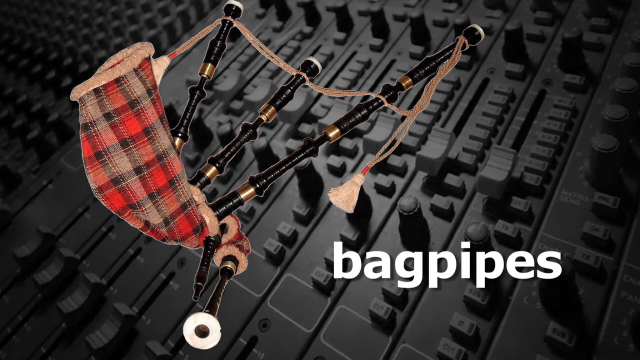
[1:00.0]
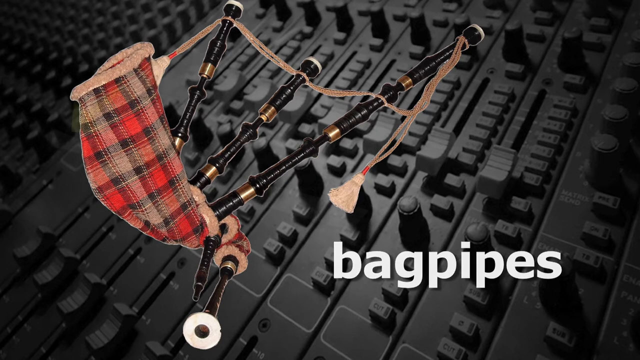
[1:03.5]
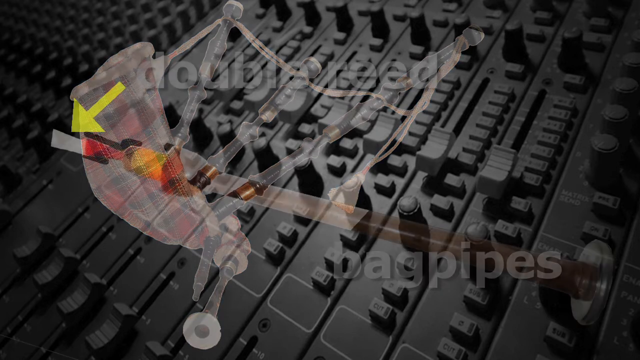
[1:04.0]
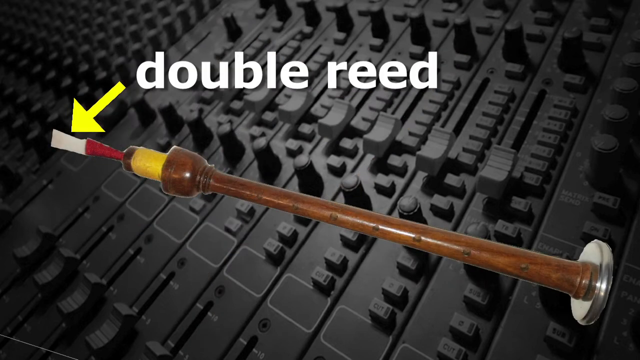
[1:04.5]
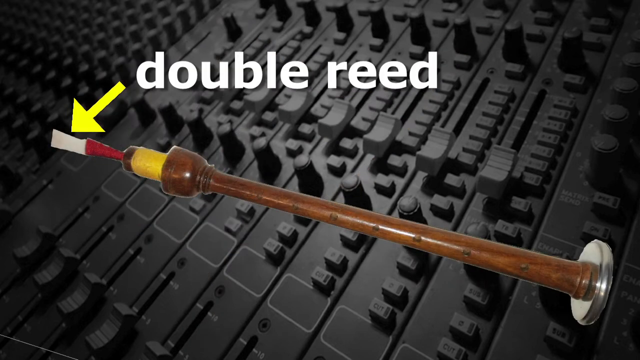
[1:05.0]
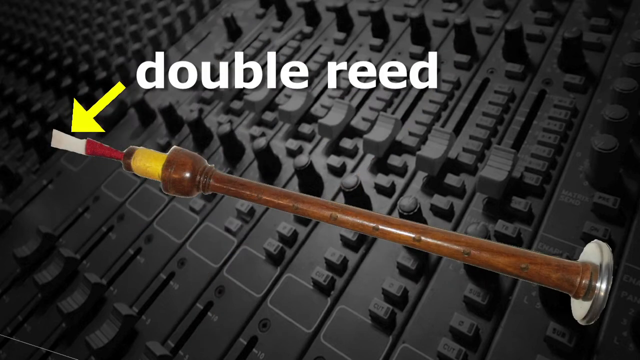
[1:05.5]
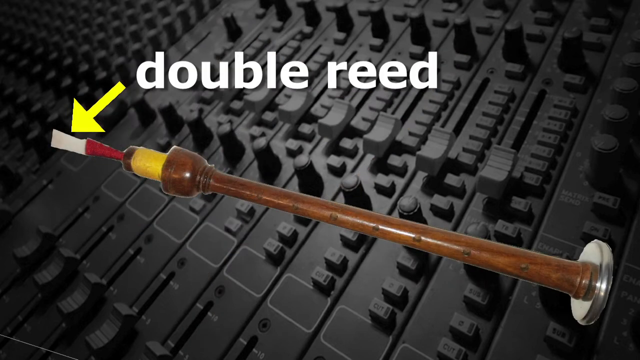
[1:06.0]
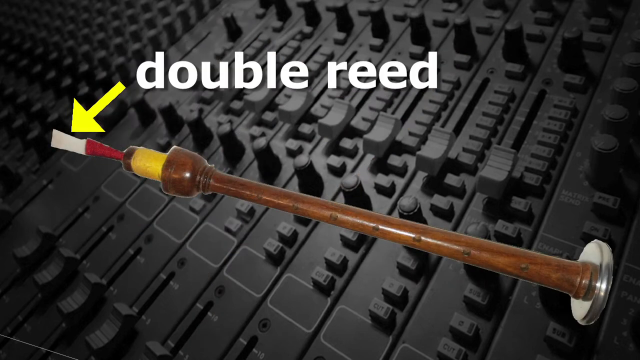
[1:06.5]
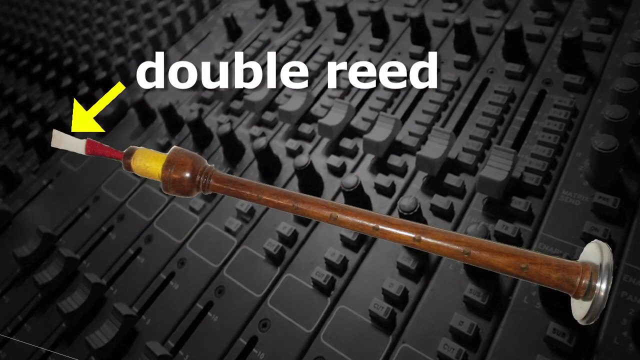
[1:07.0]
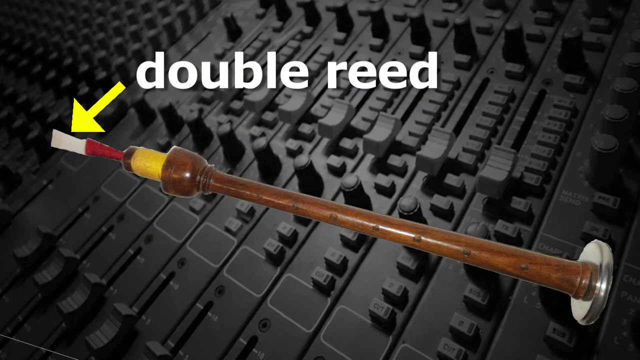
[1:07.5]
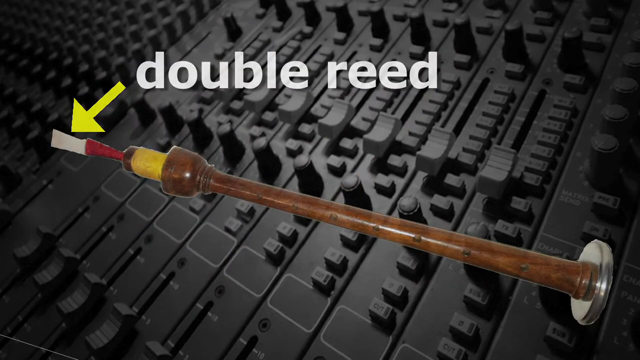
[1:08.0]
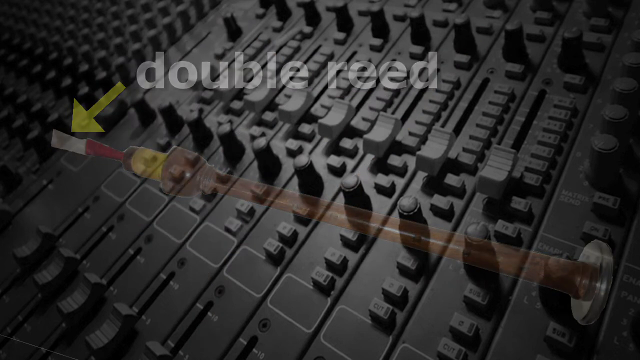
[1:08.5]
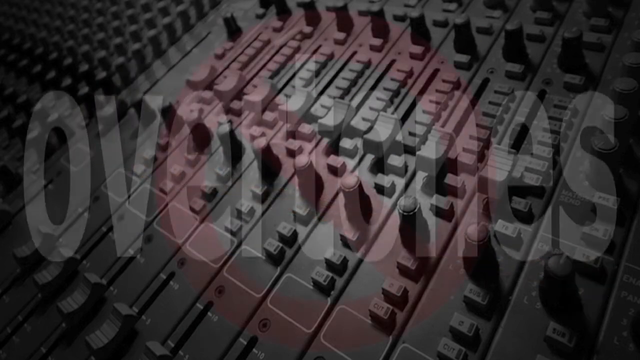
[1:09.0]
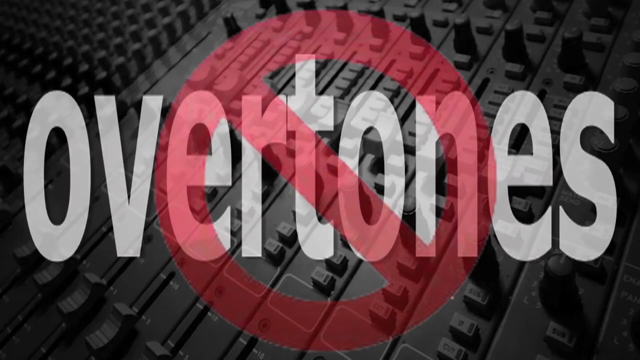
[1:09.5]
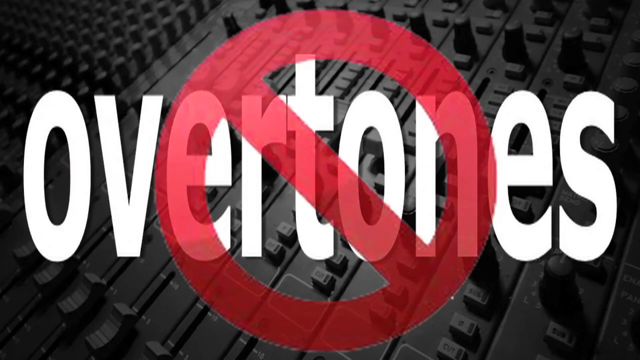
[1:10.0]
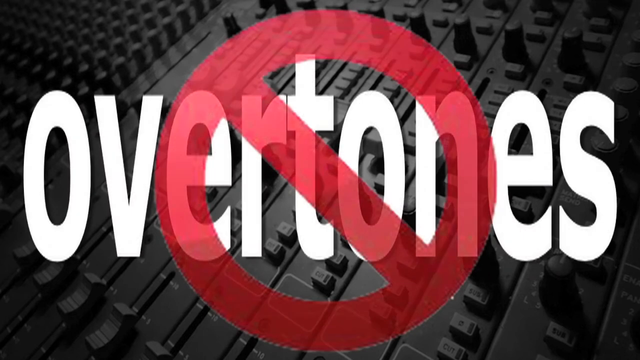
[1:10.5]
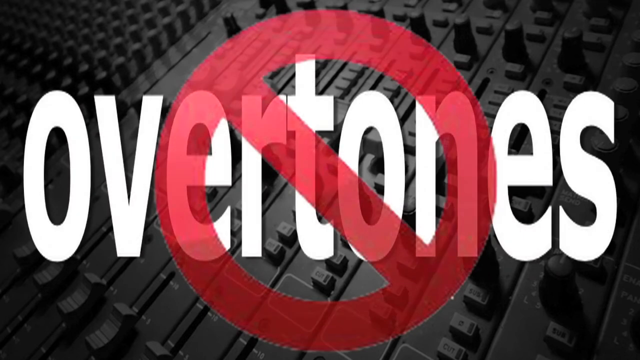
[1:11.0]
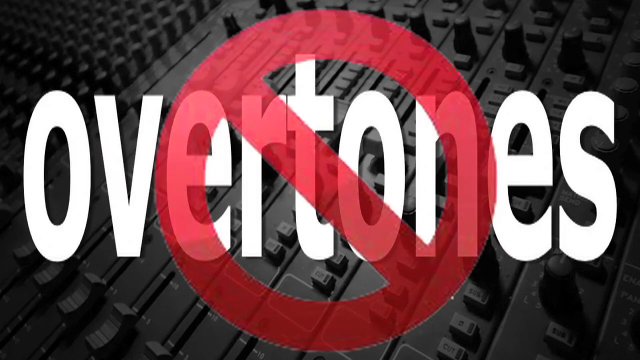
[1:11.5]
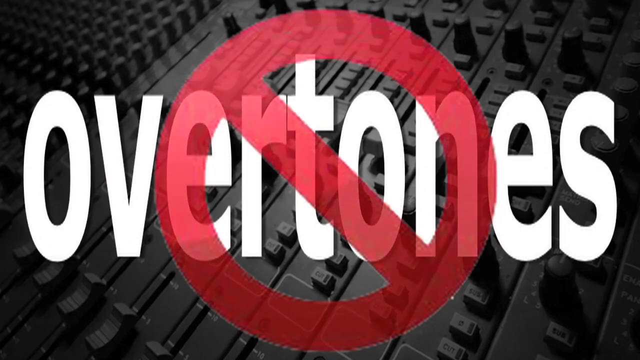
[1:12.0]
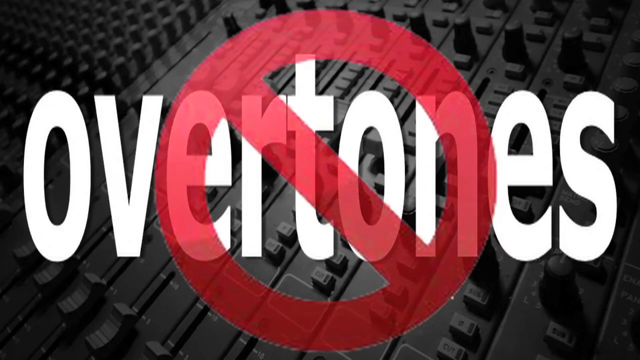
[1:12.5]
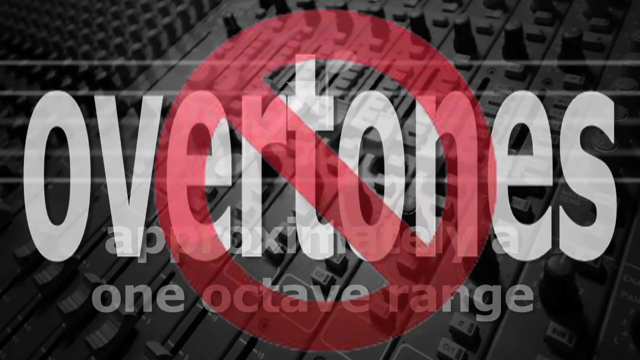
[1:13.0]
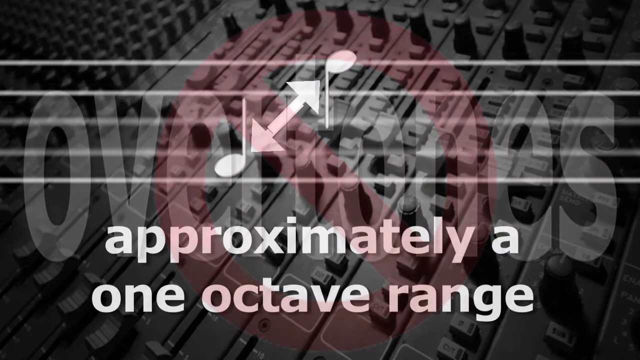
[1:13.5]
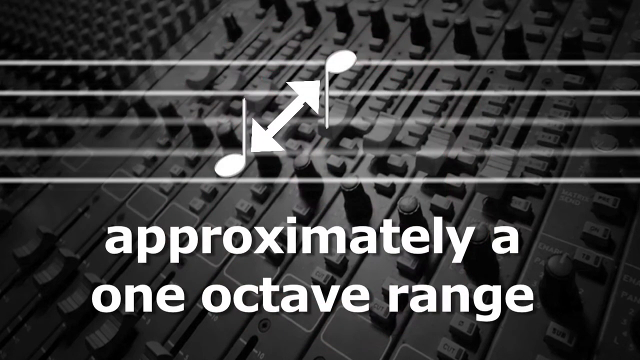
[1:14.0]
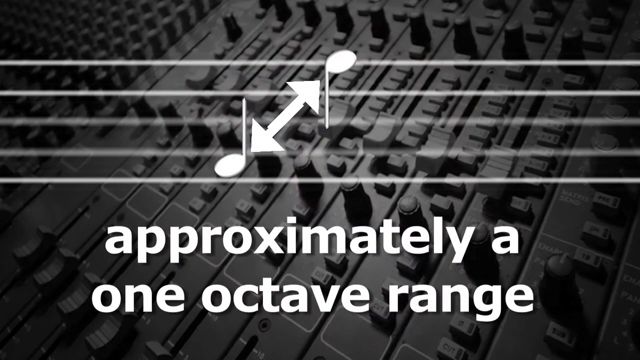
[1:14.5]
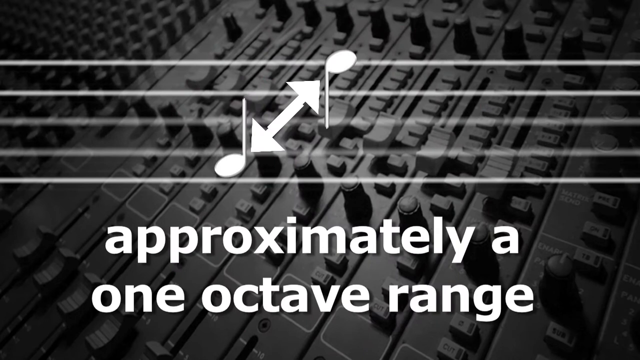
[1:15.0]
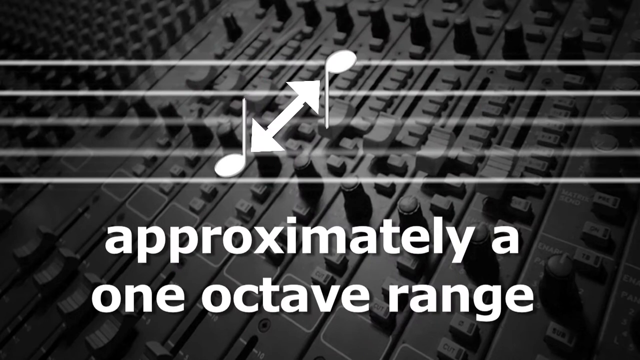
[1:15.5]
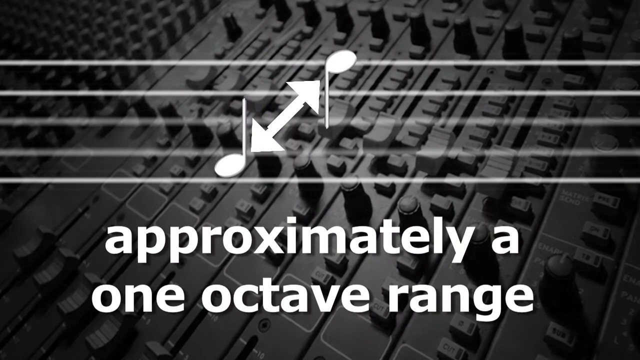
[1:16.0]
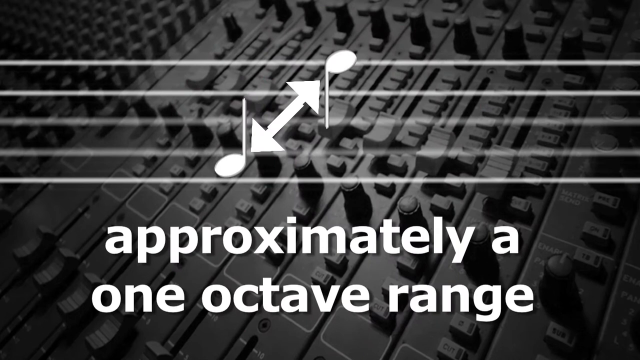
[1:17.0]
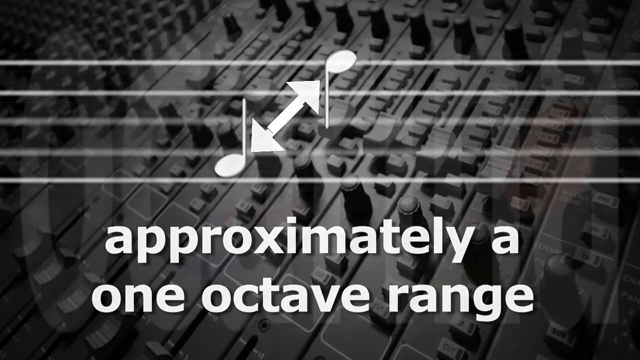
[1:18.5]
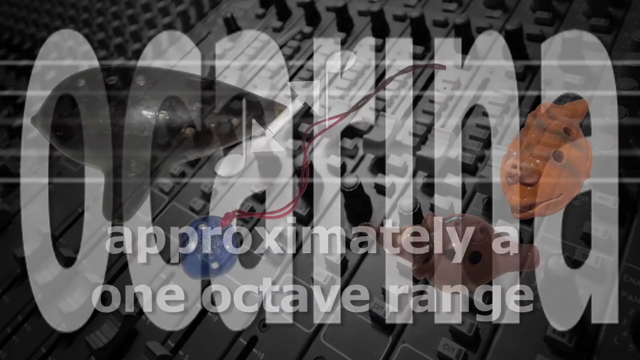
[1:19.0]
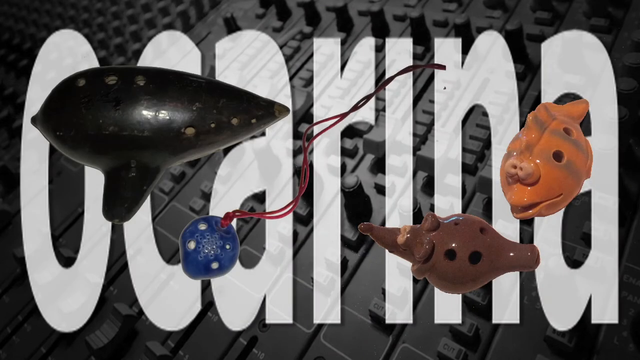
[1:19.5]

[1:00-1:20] "Bagpipes" appears in white text along the bottom right. The bagpipes have about four cylindrical sticks, apparently wooden, three coming out of the top and one out of the bottom left. Then "double reed" appears along the top of the frame, with an arrow pointing toward what is apparently a reed on the bagpipe, the part that is blown into; it is also a cylindrical wooden rod with a circular chrome or stainless steel base at the bottom right. Next, "overtones" appears in large white text across the center of the frame, with a red circle in the center and a line going down through it, as if to say no overtones. Then five lines run across the center of the frame, with "approximately a one-octave range" in white text beneath them. In the center an arrow points to the bottom left and another to the top right, and there is a musical note on the left and an upside-down musical note on the upper right.